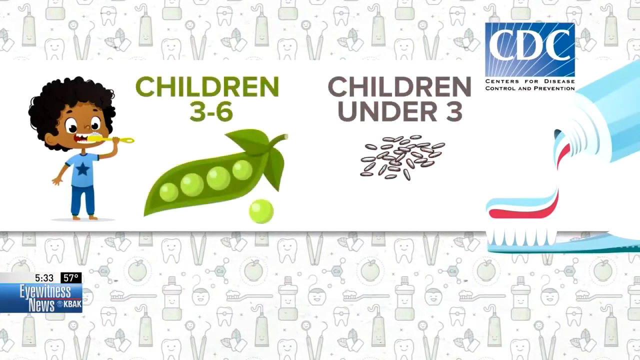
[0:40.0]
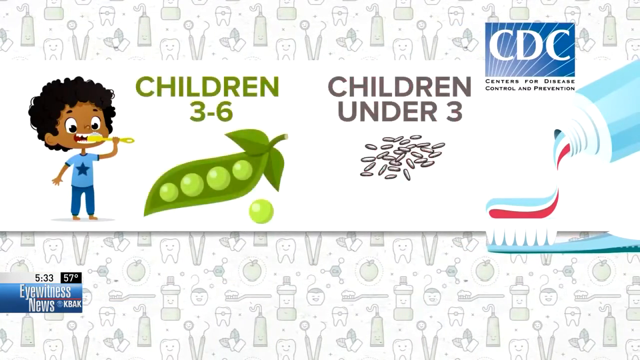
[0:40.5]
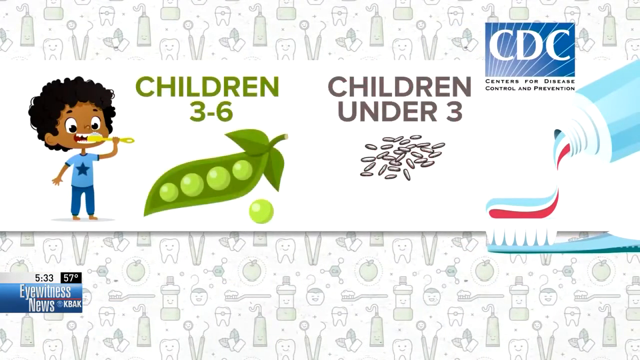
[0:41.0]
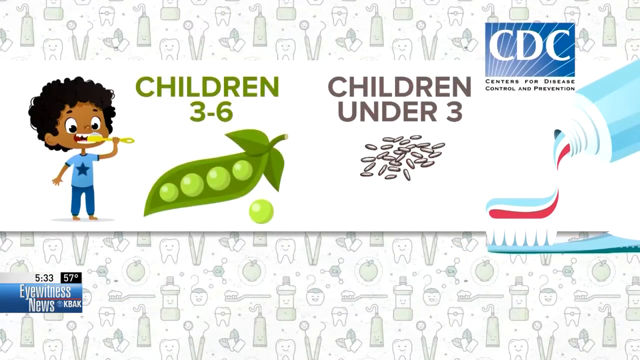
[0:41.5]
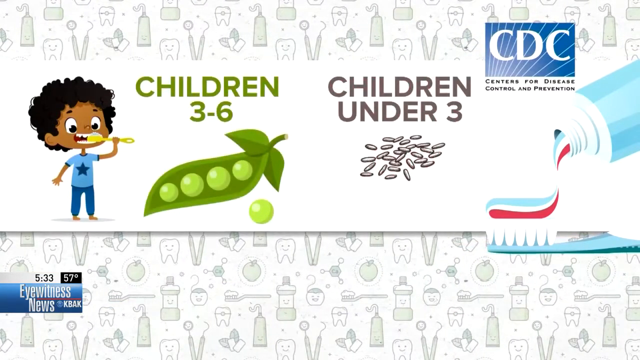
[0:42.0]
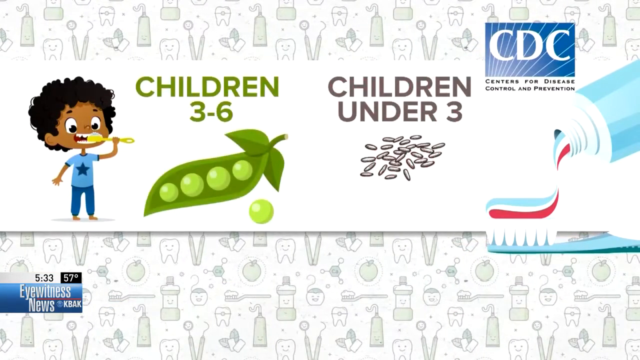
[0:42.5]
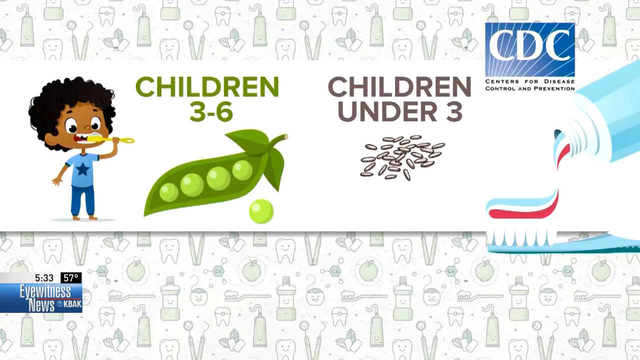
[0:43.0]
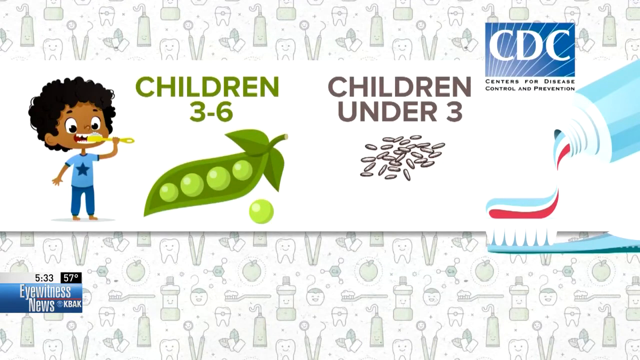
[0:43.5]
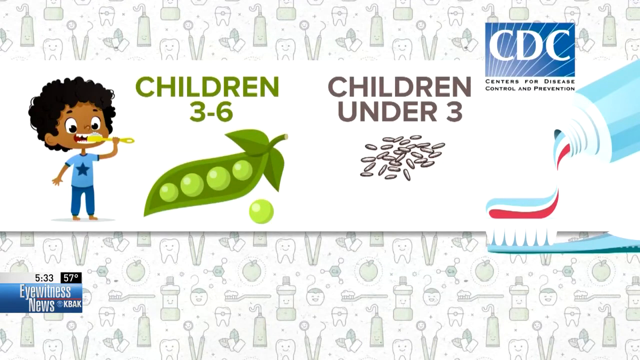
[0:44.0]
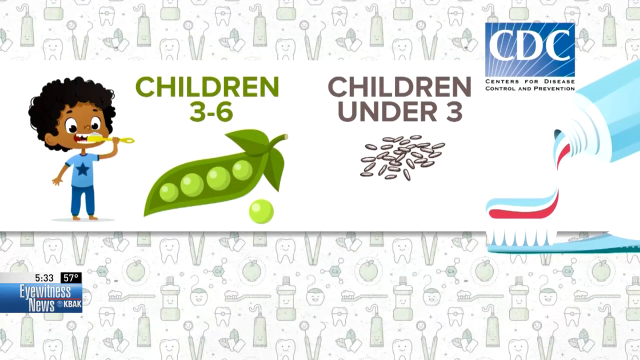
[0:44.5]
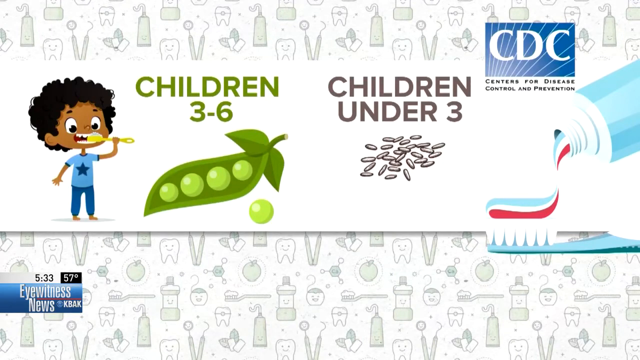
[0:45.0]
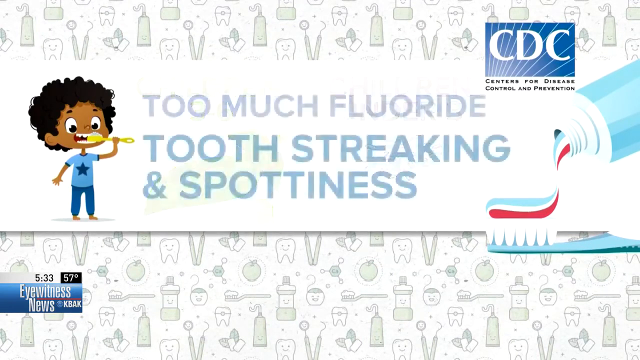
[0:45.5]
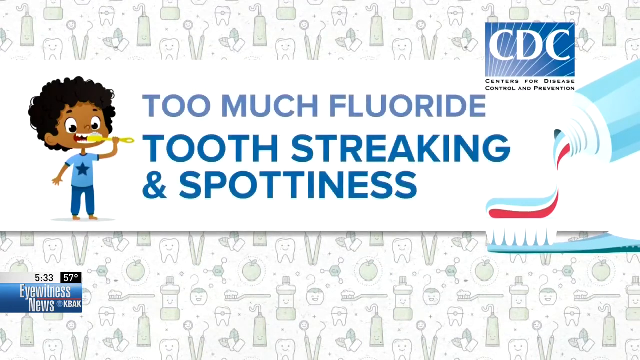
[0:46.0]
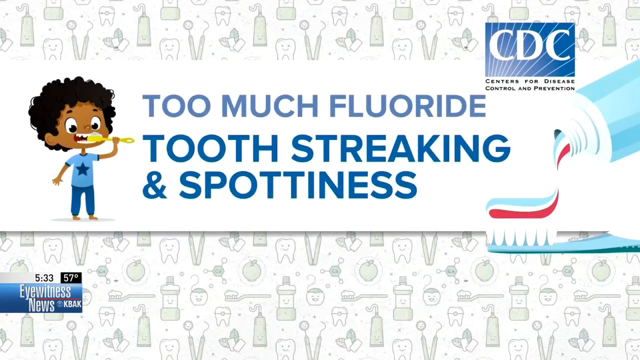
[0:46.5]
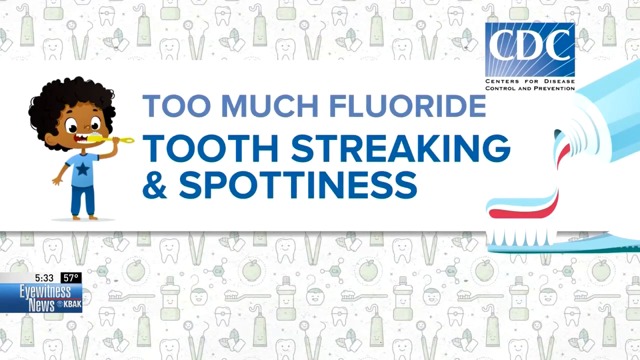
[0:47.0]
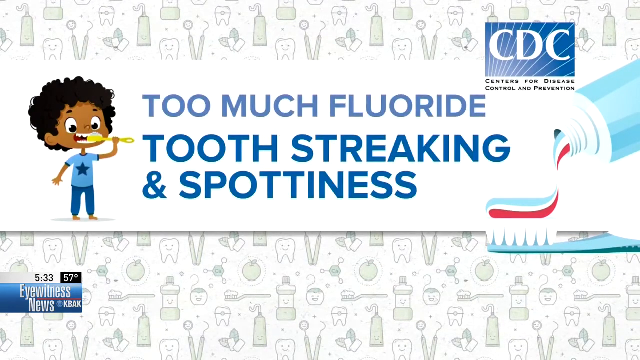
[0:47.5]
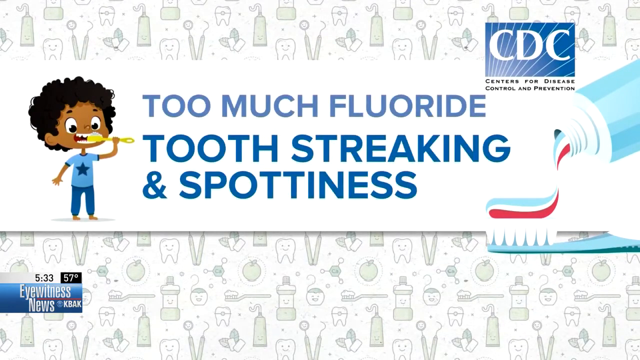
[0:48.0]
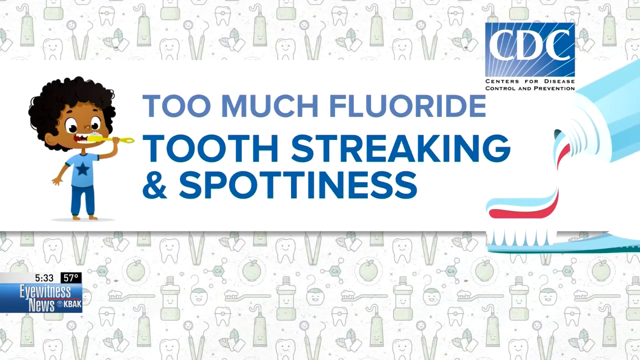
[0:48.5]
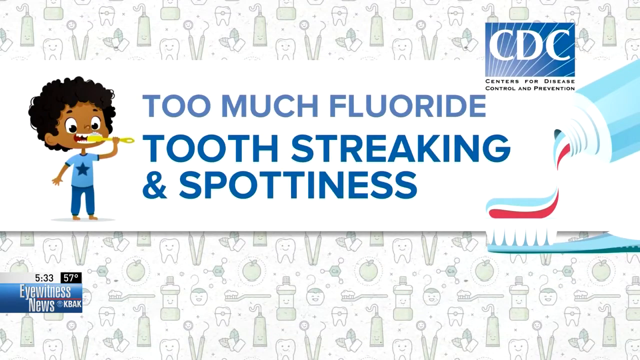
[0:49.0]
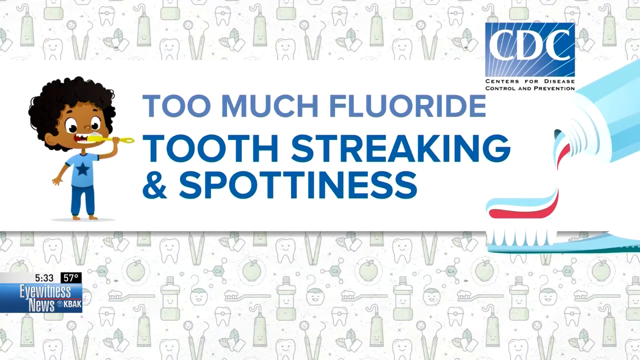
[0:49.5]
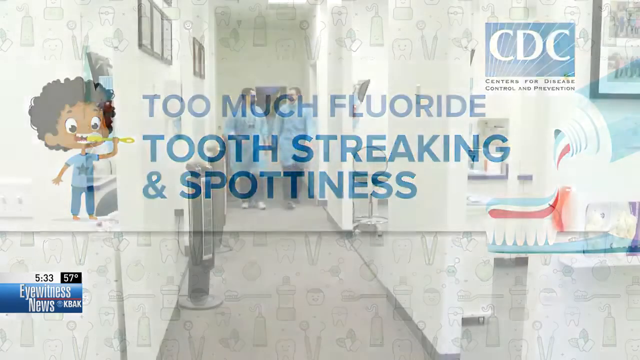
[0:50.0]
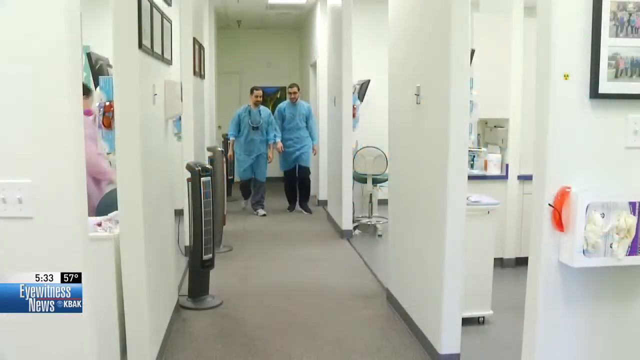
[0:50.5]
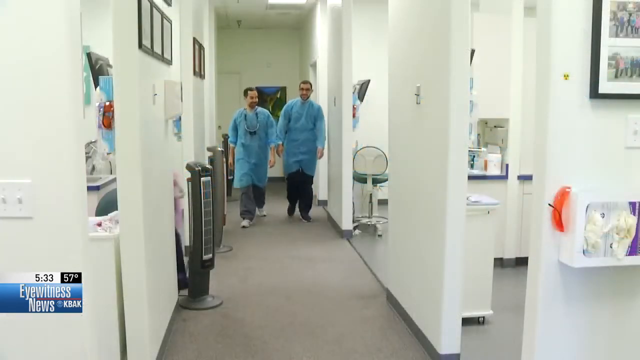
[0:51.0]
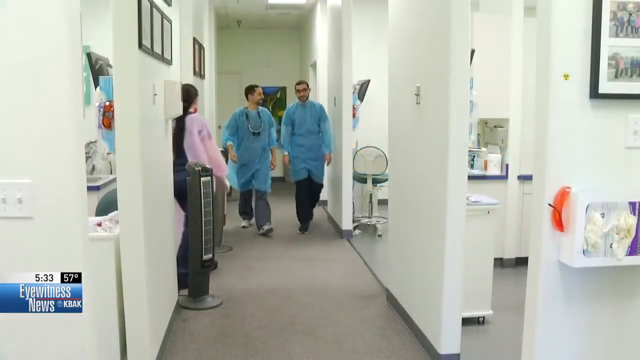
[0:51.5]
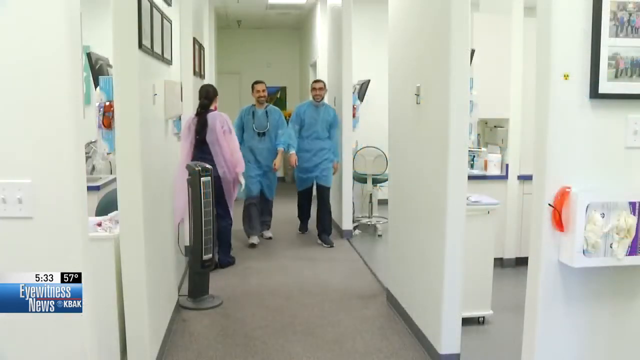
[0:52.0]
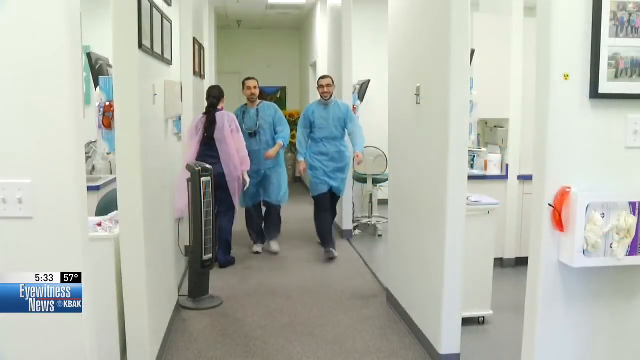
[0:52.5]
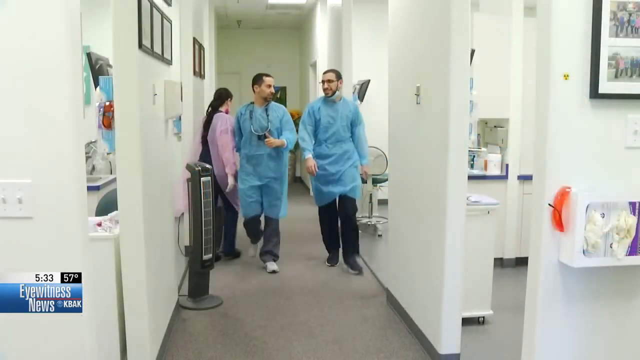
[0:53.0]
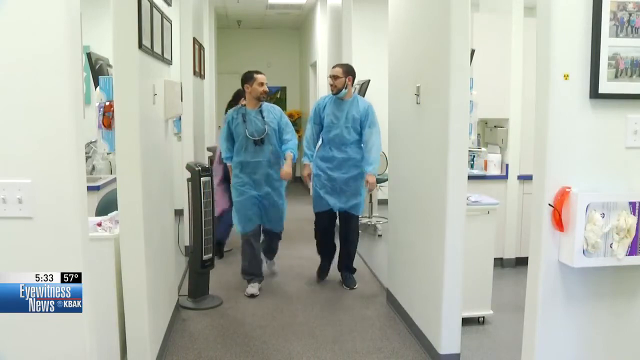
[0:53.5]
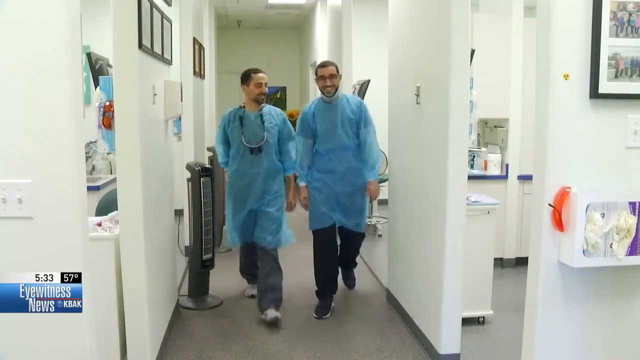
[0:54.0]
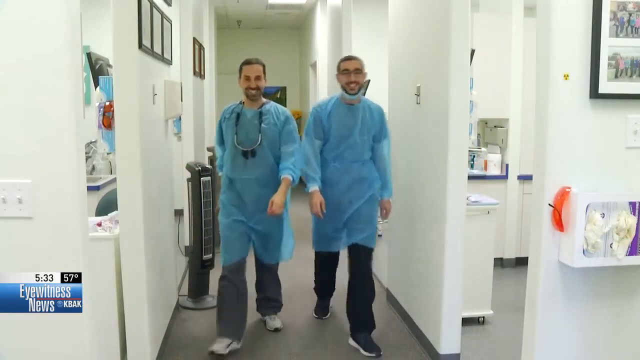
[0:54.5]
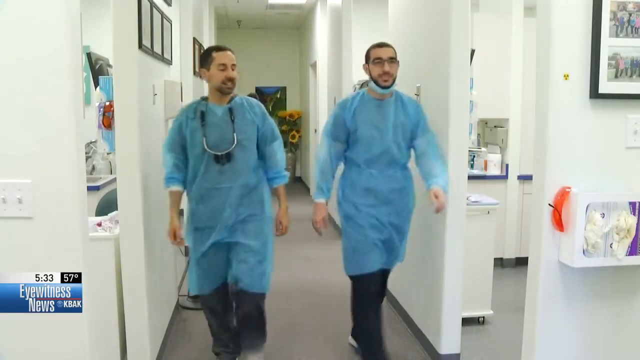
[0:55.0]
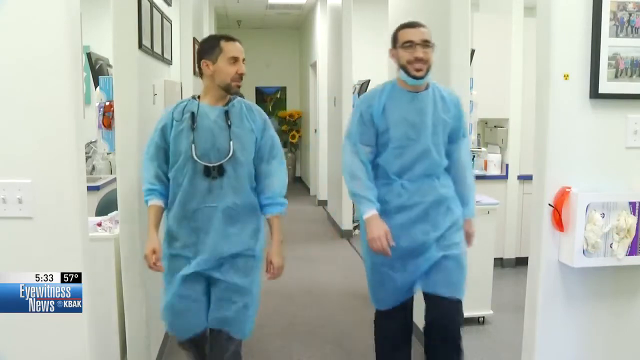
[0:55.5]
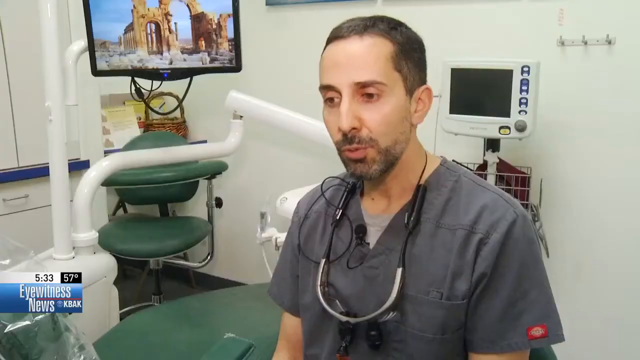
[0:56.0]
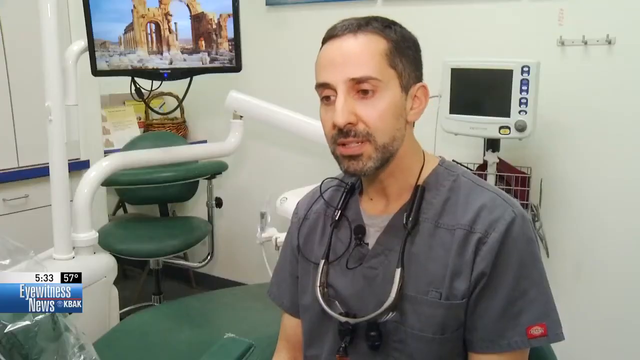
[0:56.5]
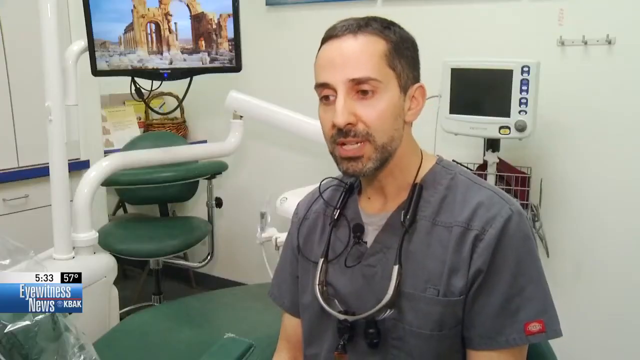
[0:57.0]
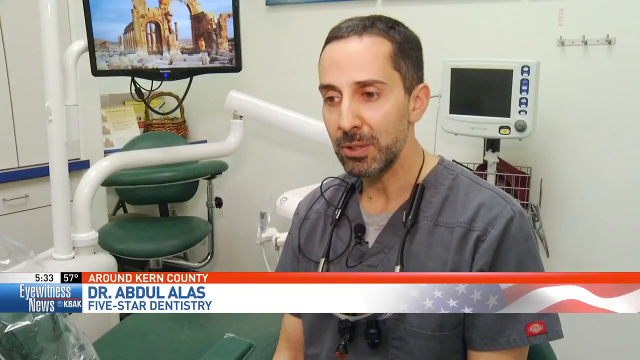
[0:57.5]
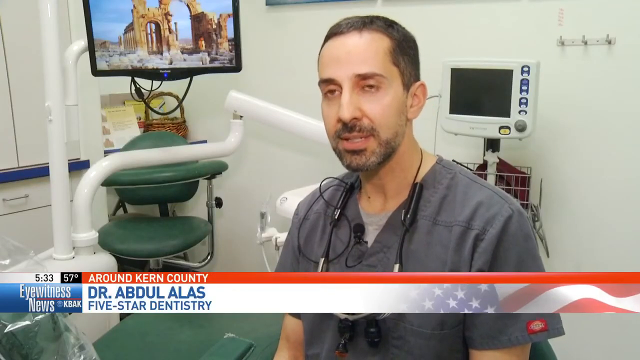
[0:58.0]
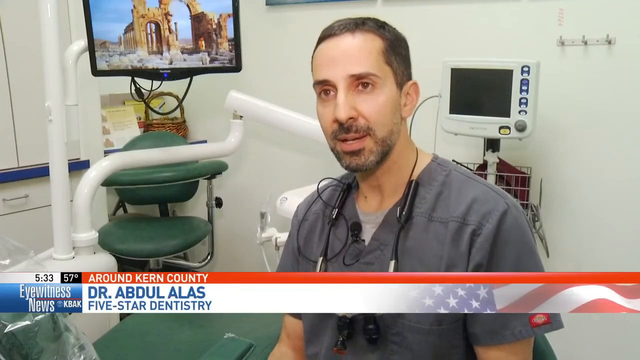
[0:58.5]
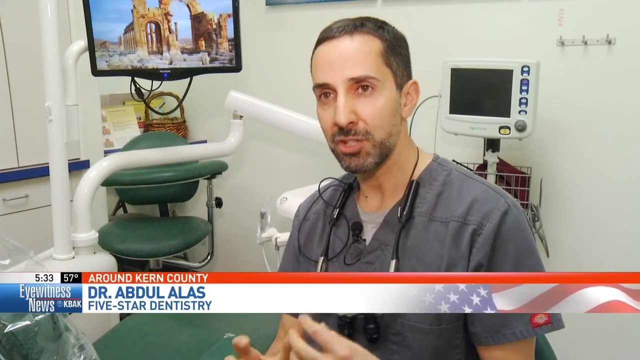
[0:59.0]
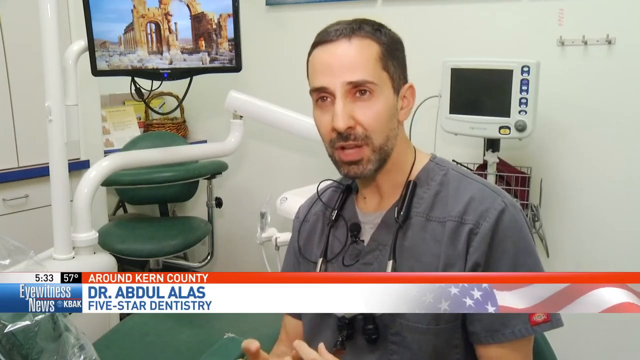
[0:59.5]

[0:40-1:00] A still graphic shows information about how much toothpaste children should use when brushing their teeth; nothing on the page moves. The background is a print-like pattern of gray and white illustrated dental-related objects, with a white bar running horizontally across the middle of the page. On the left side of the bar is a boy with black hair and brown skin, standing and holding a toothbrush with his left arm, his right arm extended straight out at an angle. He is barefoot and wears a blue shirt with a star on it and dark blue pants. Next to the boy it says "children three through six" and shows a sweet pea; on the right it says "children under three" and shows rice grains. Then the words on the bar change to "too much fluoride, tooth streaking and spottiness".